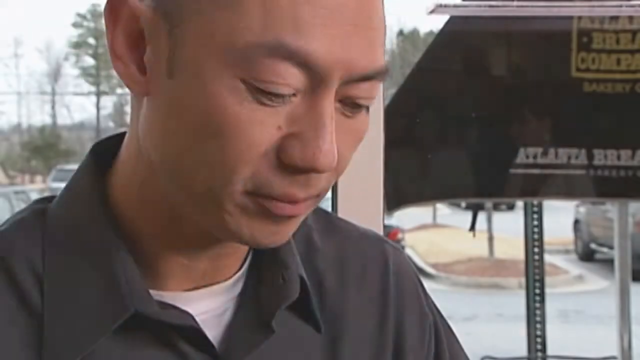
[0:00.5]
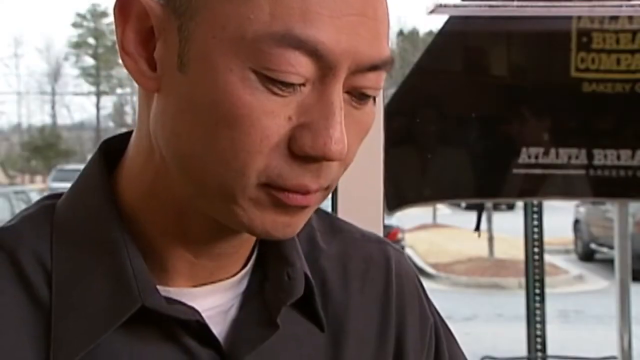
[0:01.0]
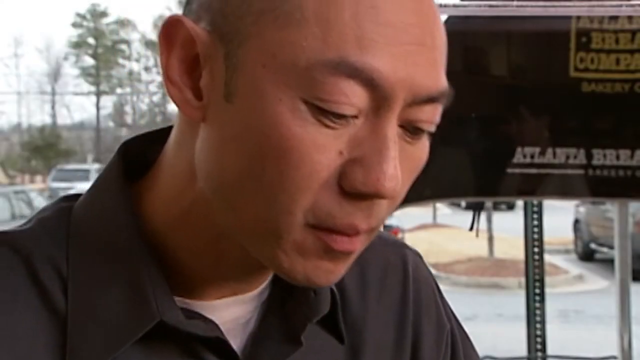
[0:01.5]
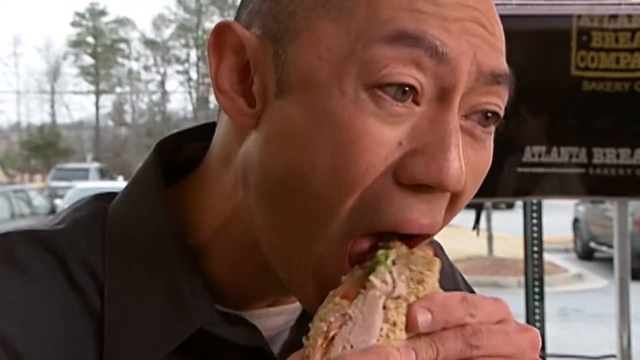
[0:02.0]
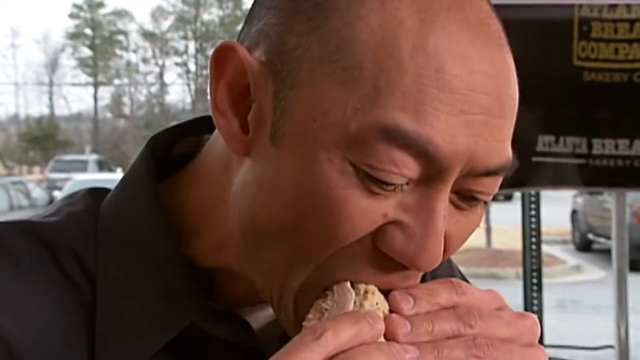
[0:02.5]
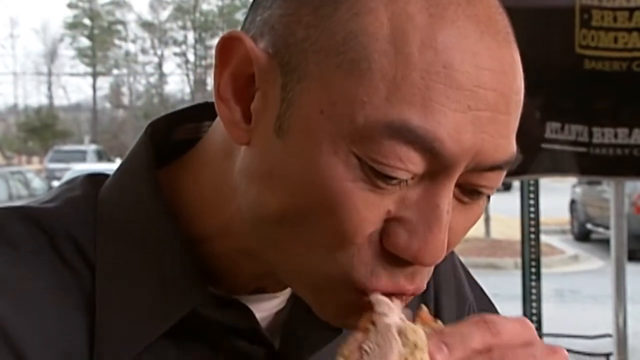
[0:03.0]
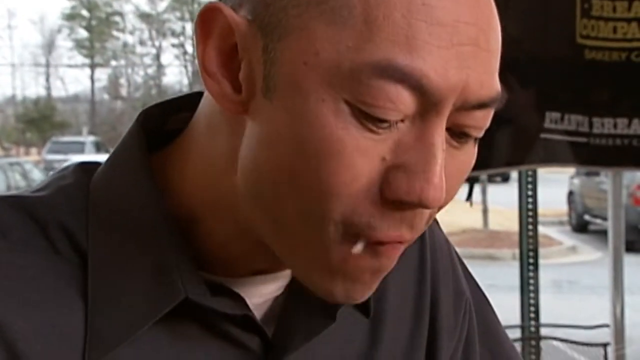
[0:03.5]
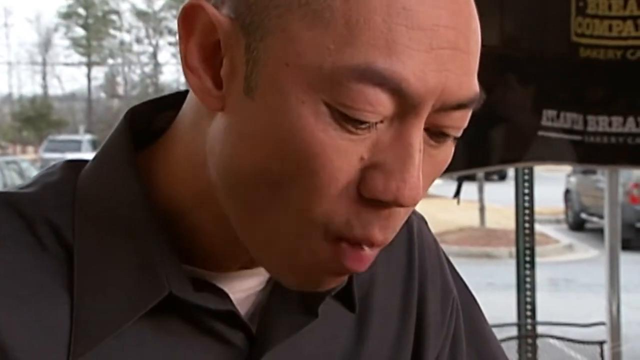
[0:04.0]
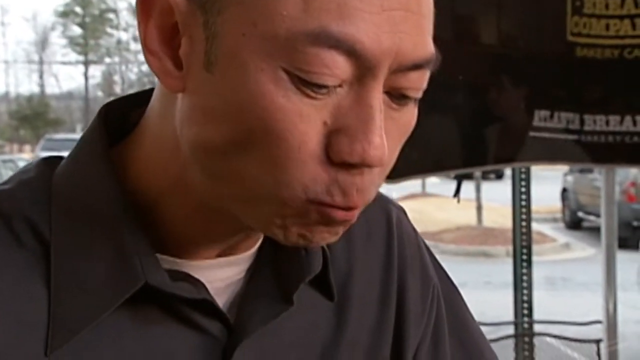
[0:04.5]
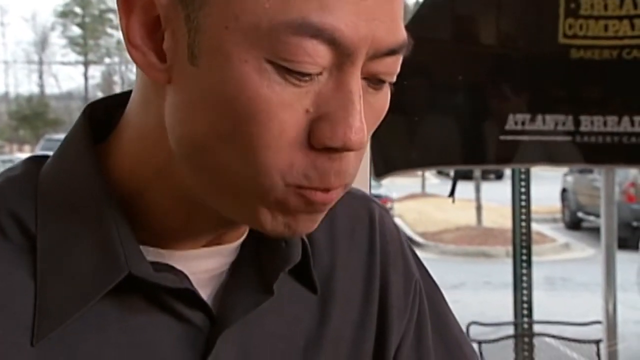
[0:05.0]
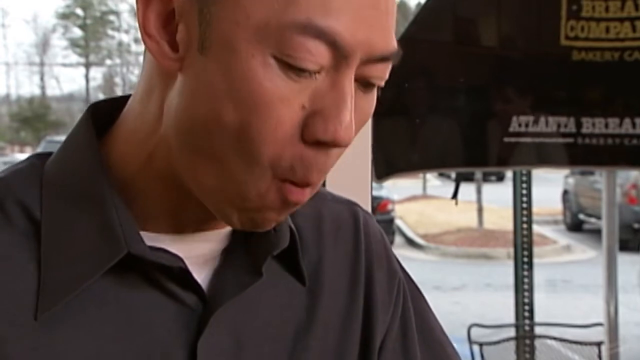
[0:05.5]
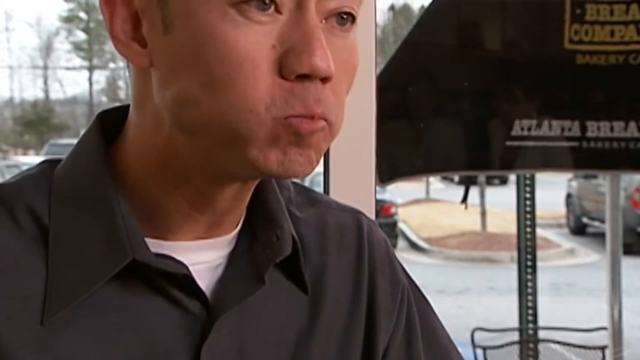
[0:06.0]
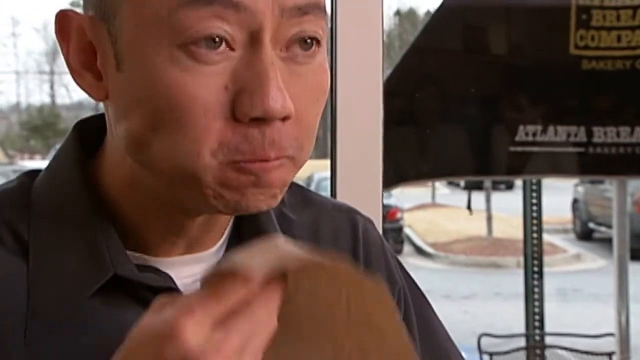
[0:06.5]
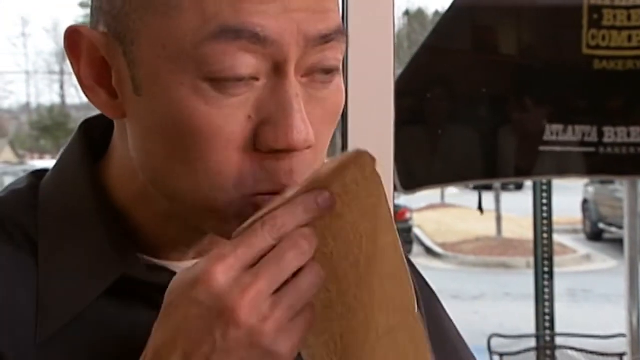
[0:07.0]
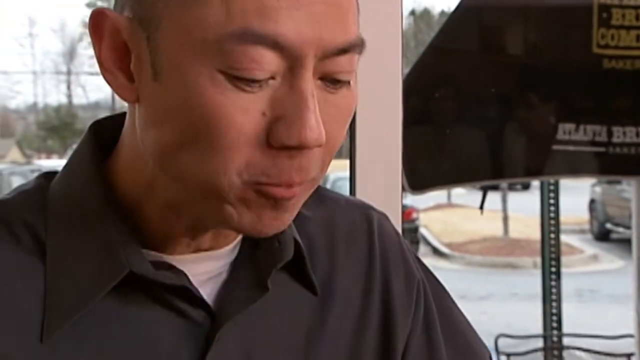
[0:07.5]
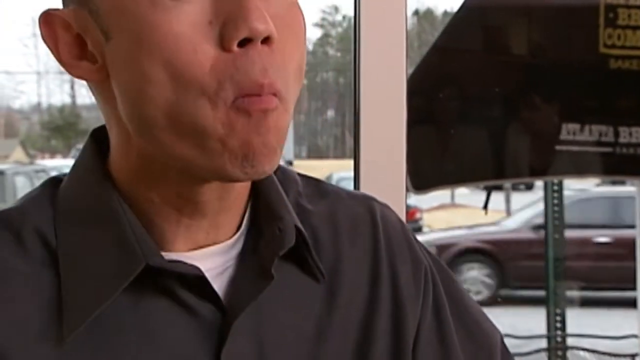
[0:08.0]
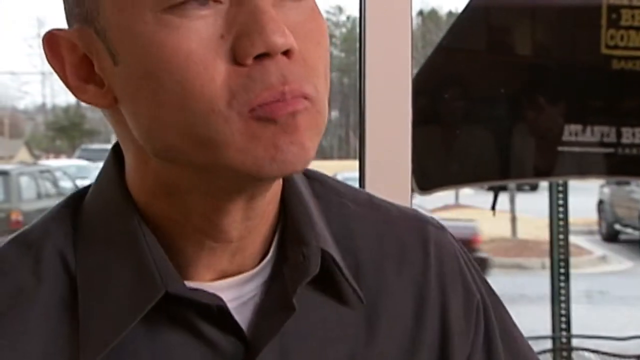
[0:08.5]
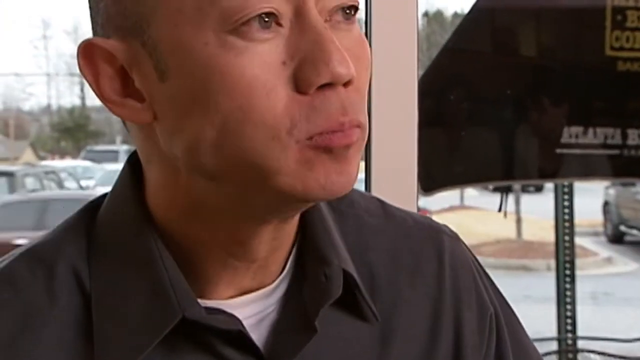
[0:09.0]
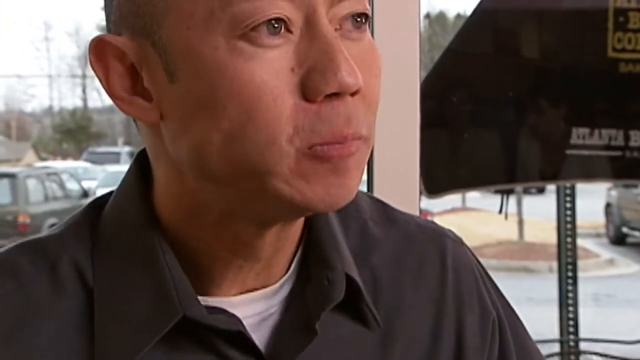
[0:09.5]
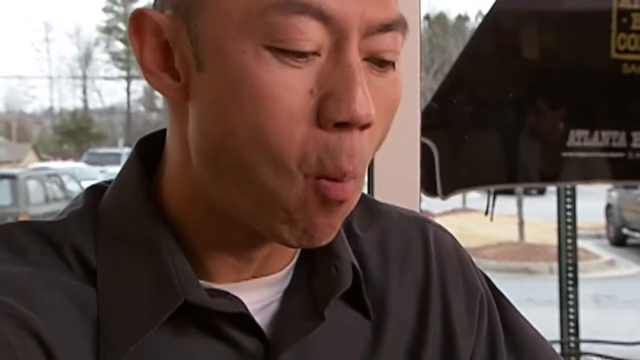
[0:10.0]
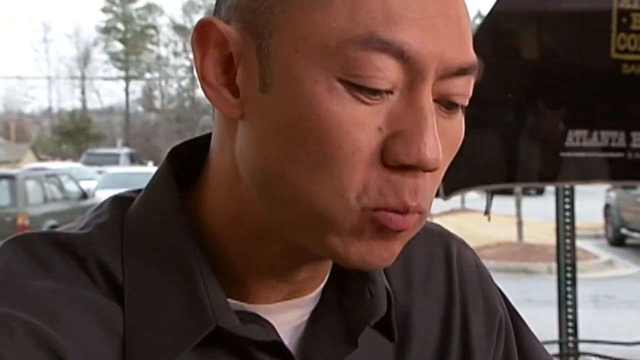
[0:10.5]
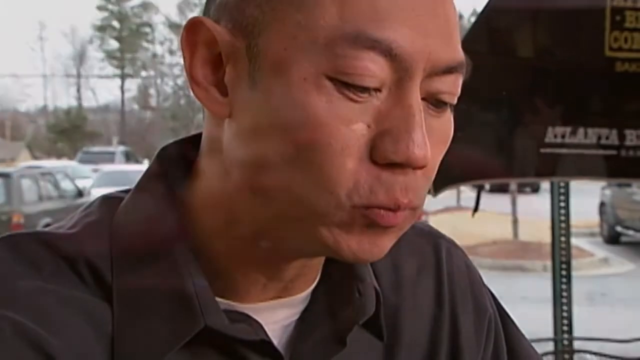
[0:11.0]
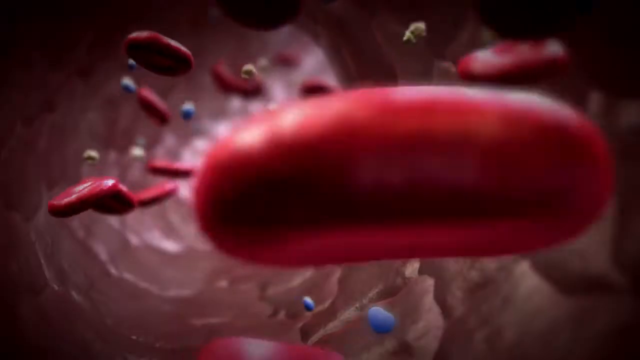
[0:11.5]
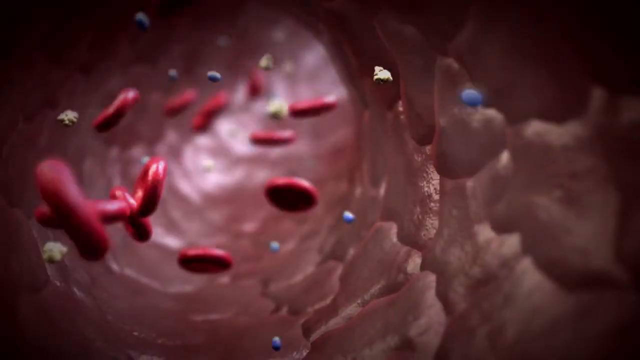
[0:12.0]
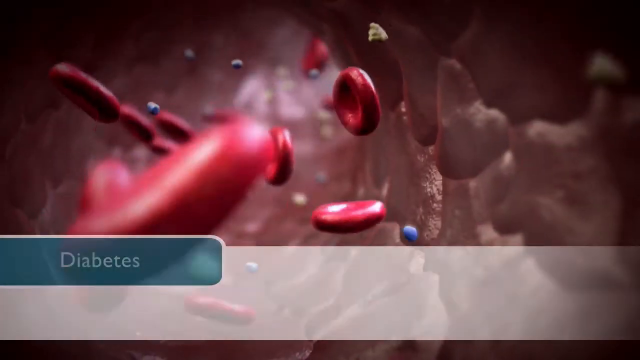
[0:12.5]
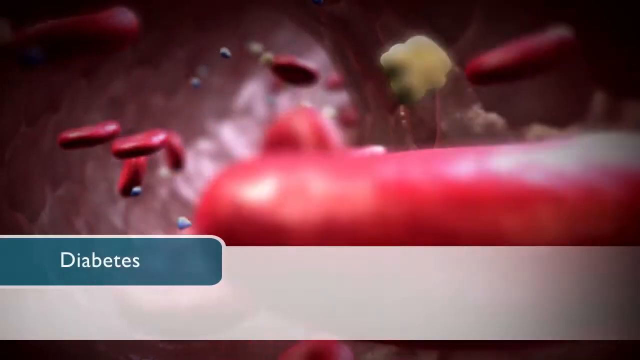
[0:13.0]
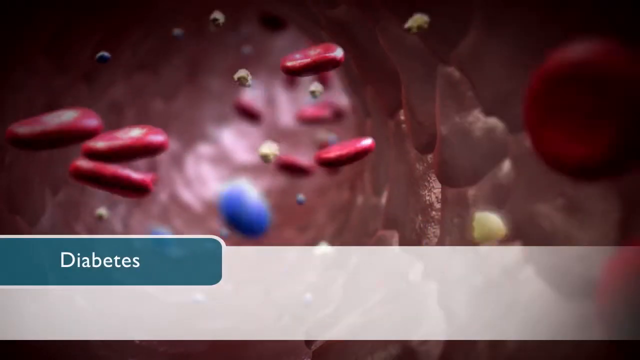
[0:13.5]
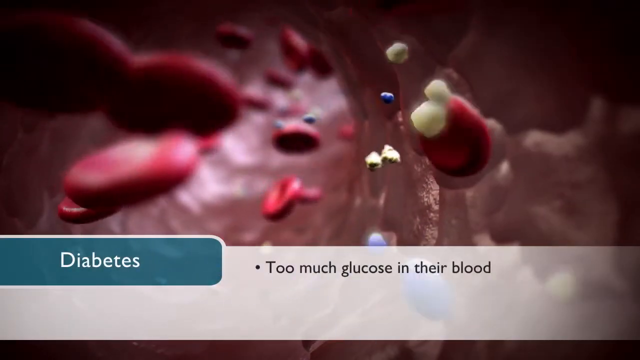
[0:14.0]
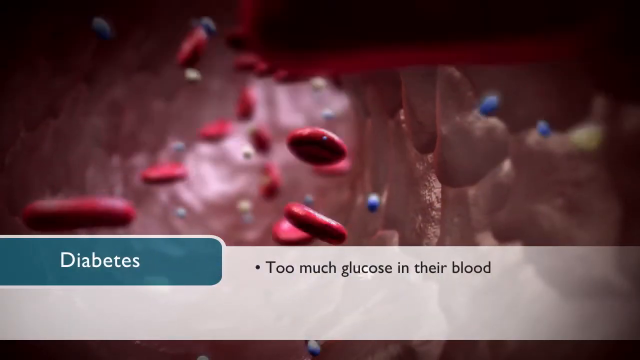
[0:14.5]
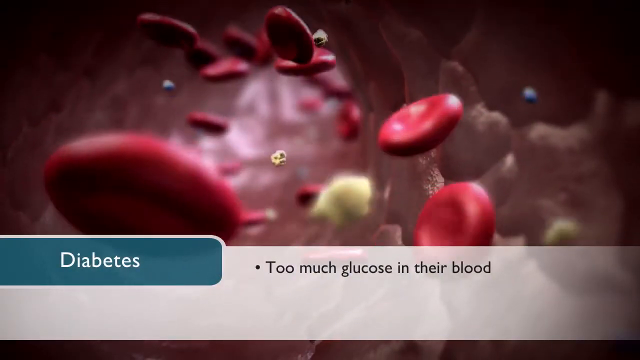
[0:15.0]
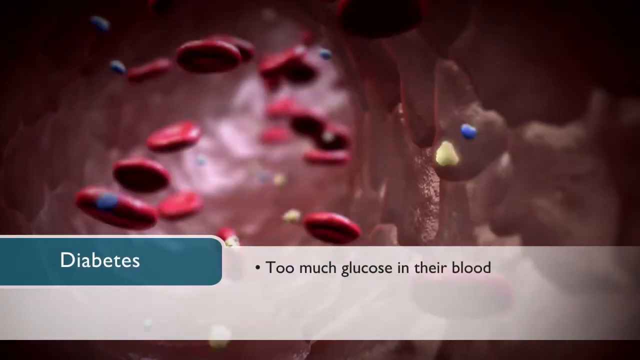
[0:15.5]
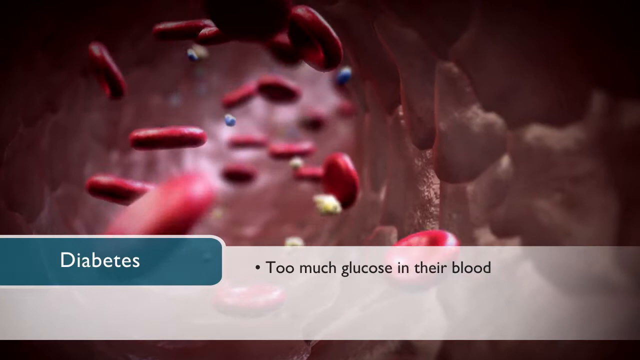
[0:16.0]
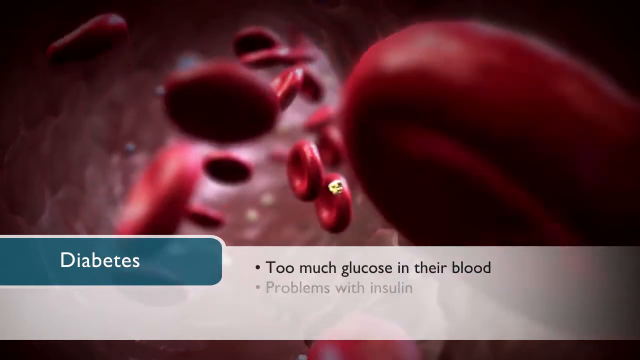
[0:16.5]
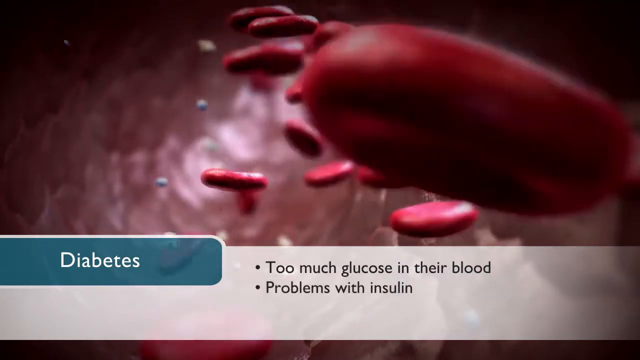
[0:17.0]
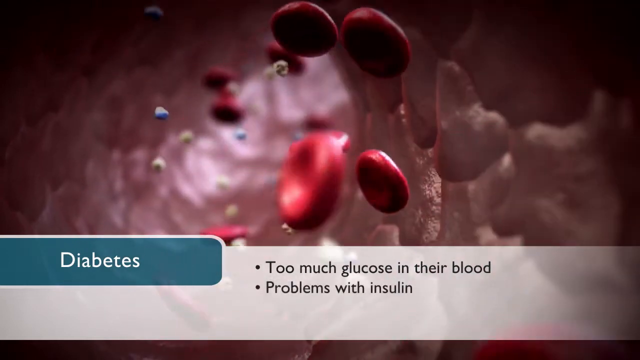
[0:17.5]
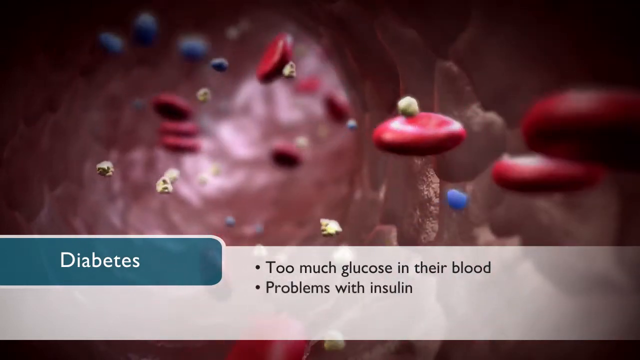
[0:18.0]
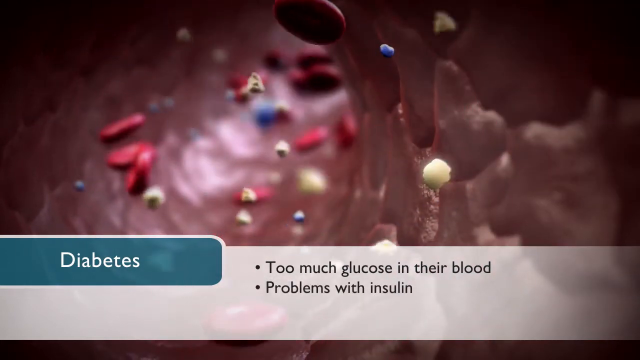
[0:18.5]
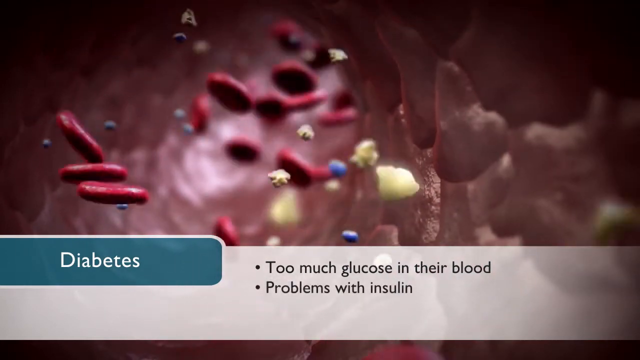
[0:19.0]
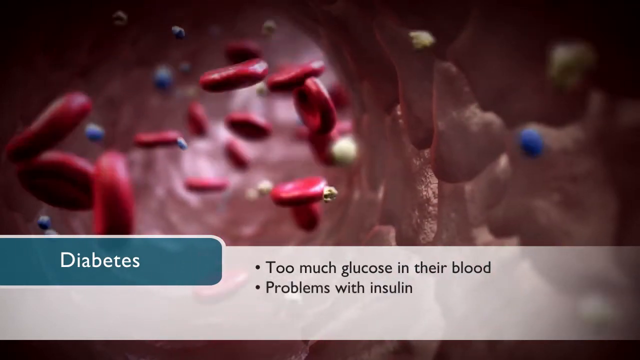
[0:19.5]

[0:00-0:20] The video begins with footage of an Asian man in a restaurant eating a sandwich. He fills the left half of the screen, while on the right-hand side there is a sign that says "Atlanta Bread Company". The man is seated in front of a window, and behind him part of a car park is visible, with trees and a light grey sky in the background. Holding the sandwich with both hands, he leans forward and takes a large bite, then chews. He raises his right hand and dabs his mouth with a light brown paper napkin, looking towards the right of the screen as he chews. The next shot shows what looks like a digital animation of the bloodstream inside the human body. On the left of the screen is a dark green horizontal rectangle with the word "diabetes" in white text. Flat, round red shapes and very small blue and yellow spheres move through the bloodstream. A large white rectangle is superimposed horizontally over the lower quarter of the screen, and black text on it says "too much glucose in their blood". More text then appears that says "problems with insulin". The image then fades away.